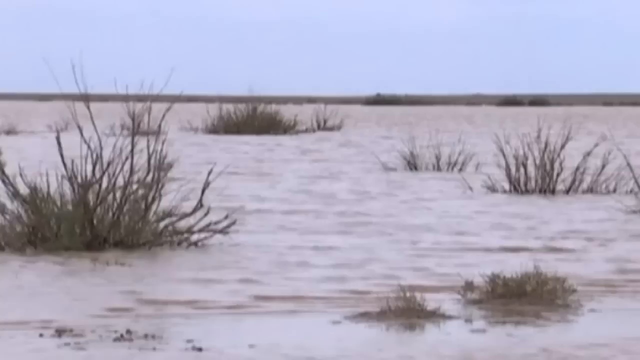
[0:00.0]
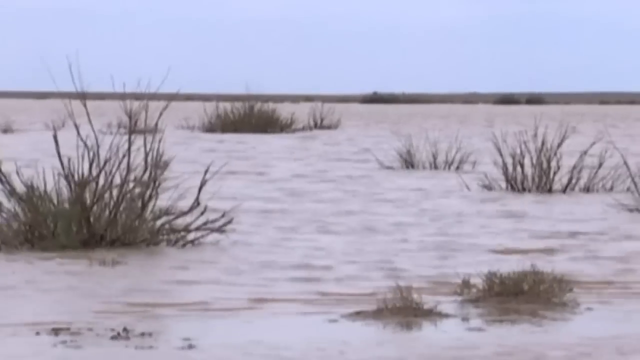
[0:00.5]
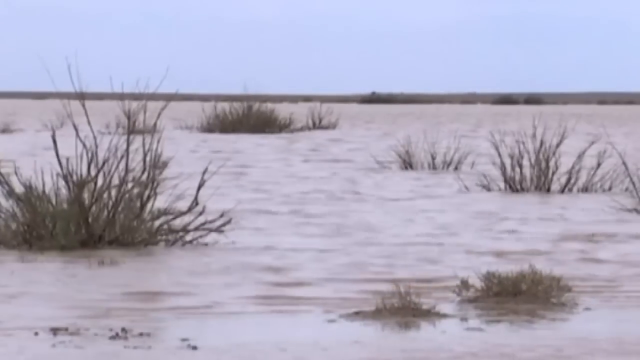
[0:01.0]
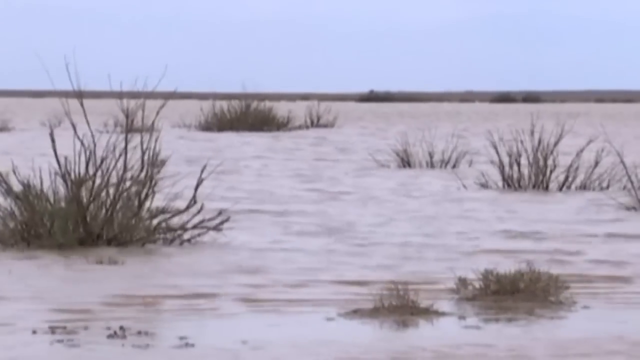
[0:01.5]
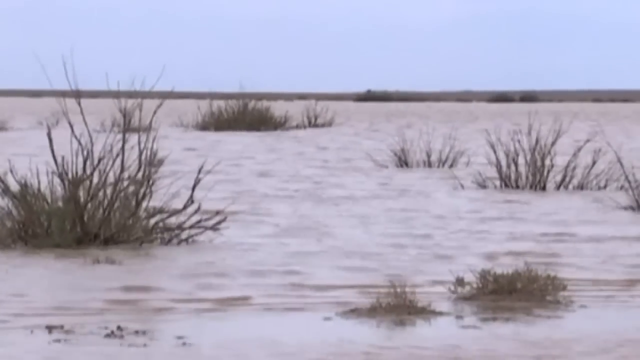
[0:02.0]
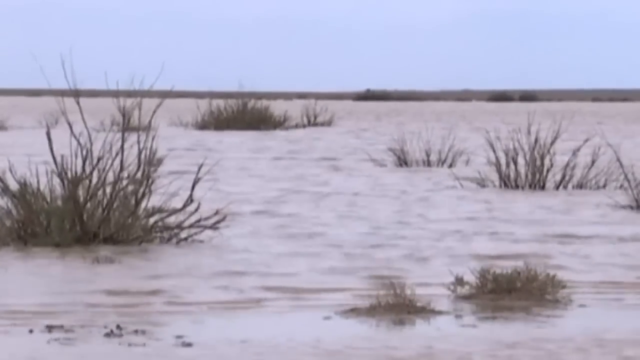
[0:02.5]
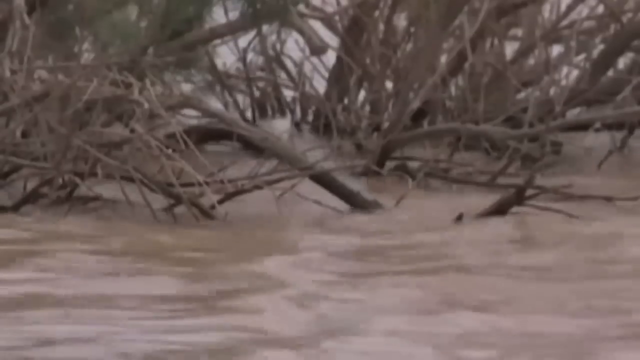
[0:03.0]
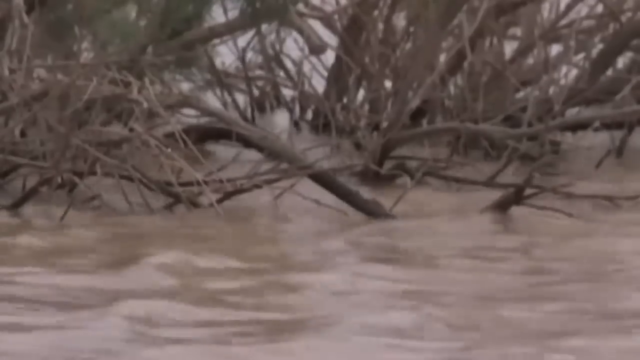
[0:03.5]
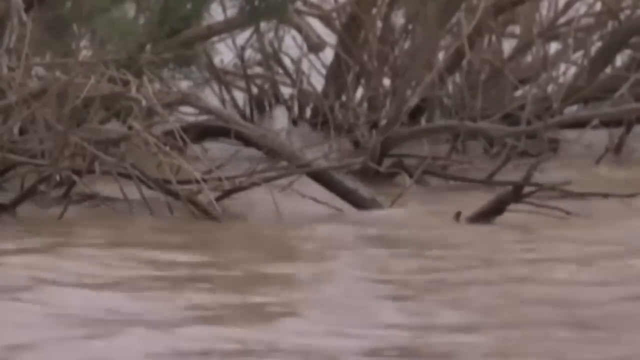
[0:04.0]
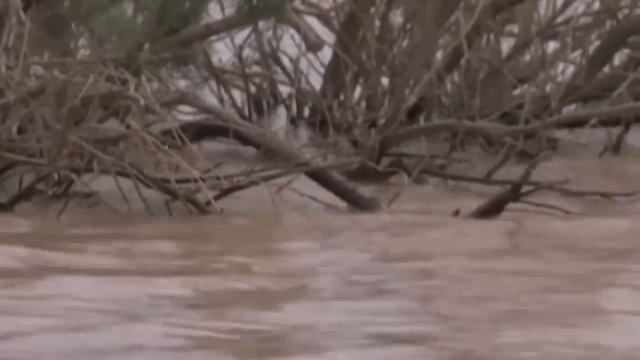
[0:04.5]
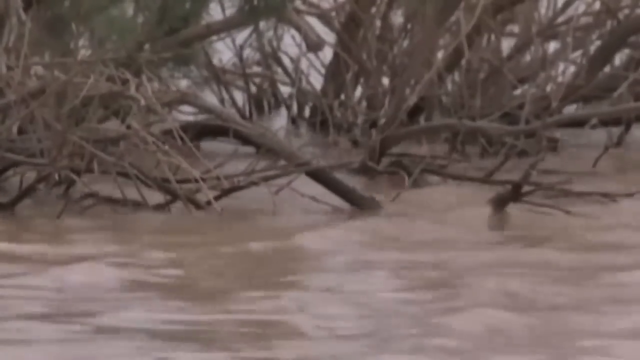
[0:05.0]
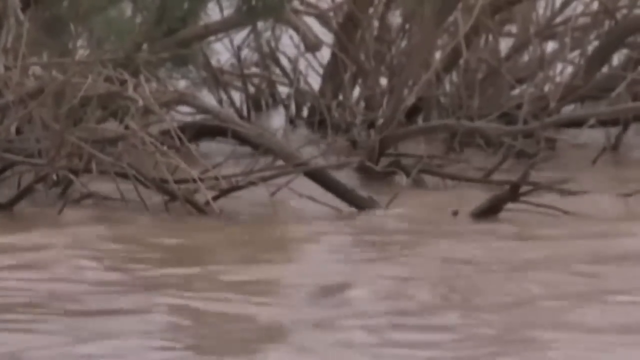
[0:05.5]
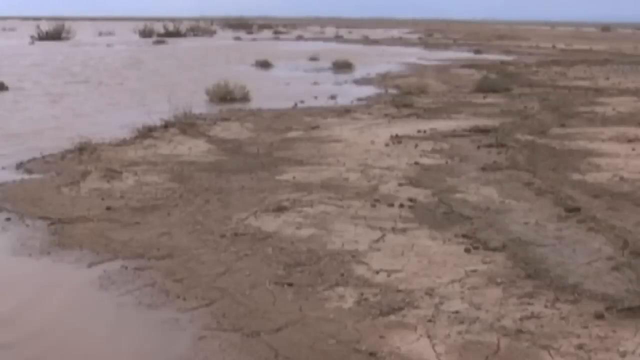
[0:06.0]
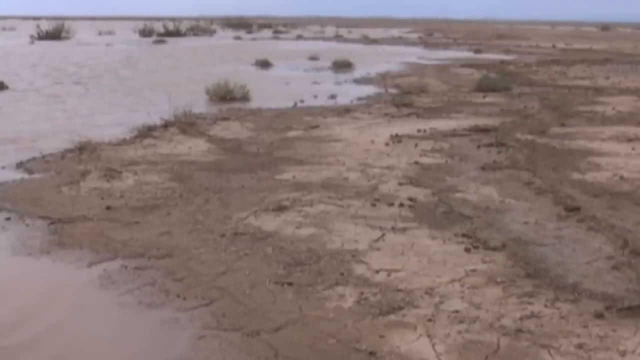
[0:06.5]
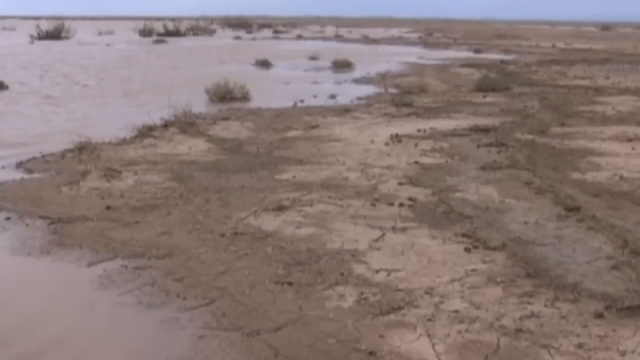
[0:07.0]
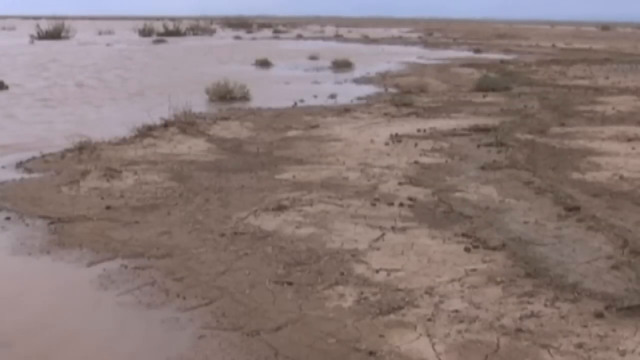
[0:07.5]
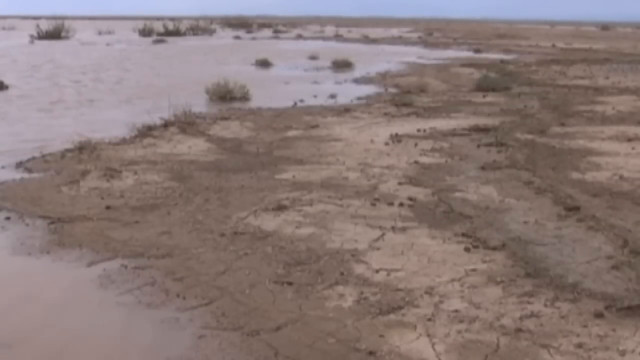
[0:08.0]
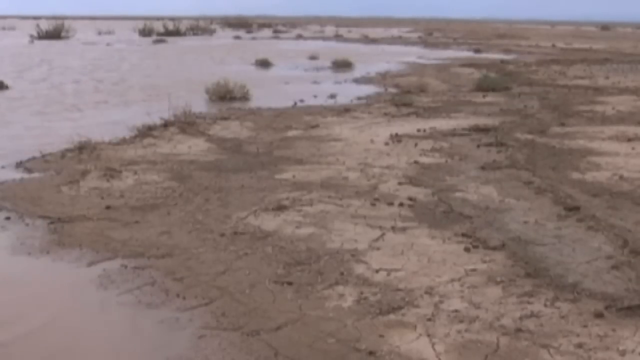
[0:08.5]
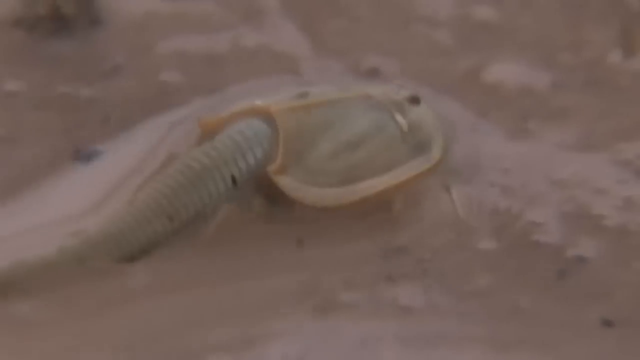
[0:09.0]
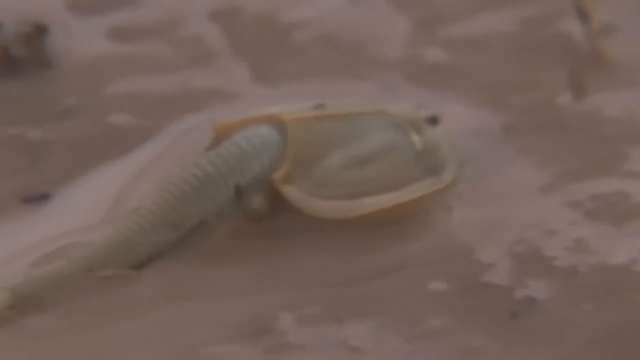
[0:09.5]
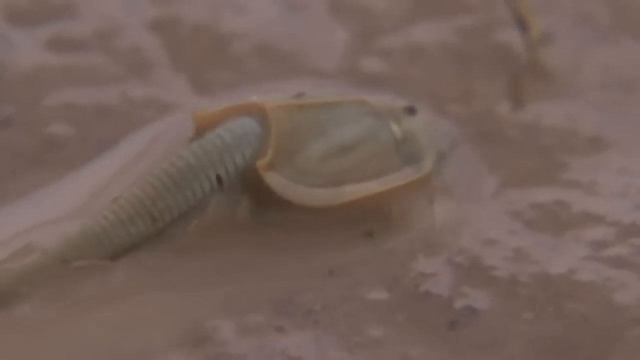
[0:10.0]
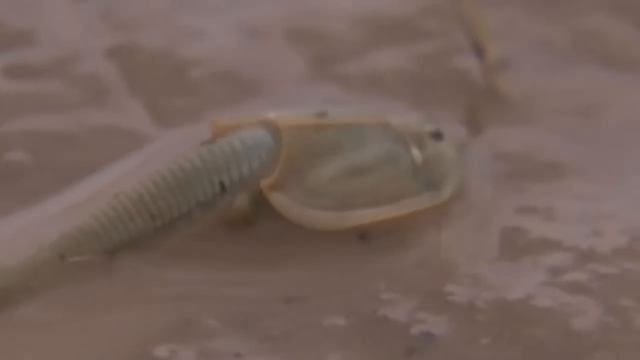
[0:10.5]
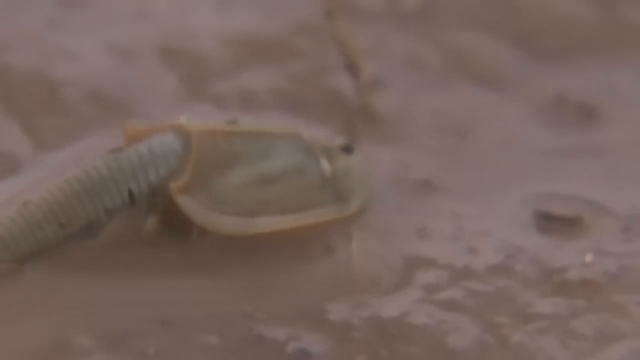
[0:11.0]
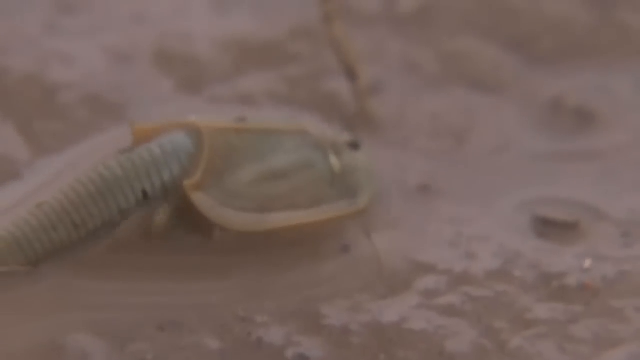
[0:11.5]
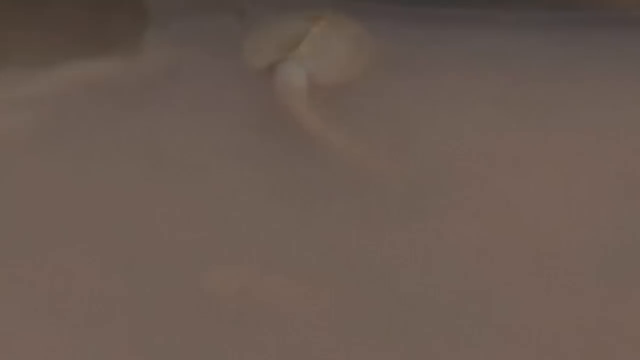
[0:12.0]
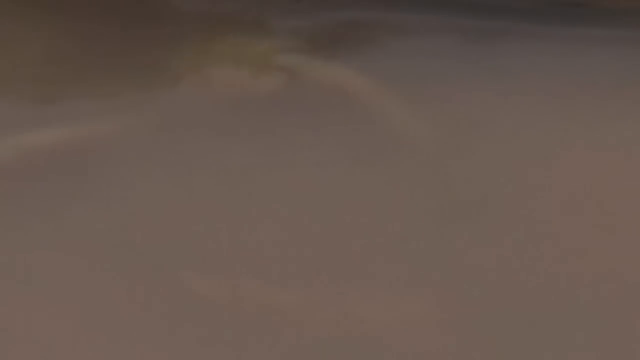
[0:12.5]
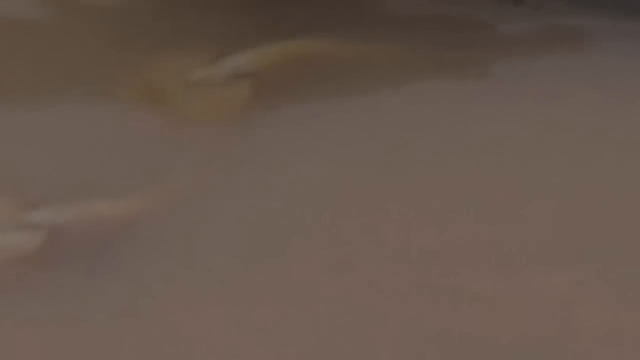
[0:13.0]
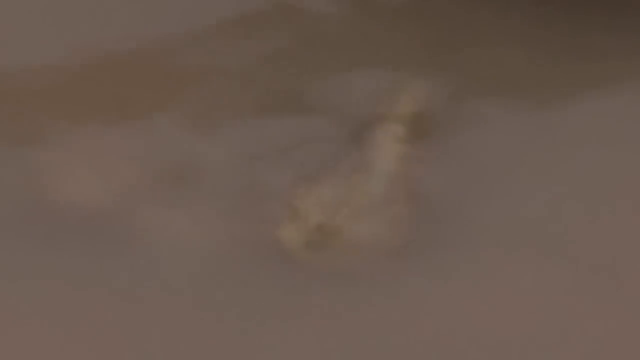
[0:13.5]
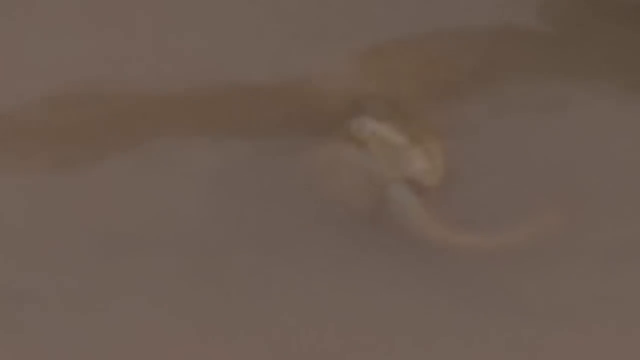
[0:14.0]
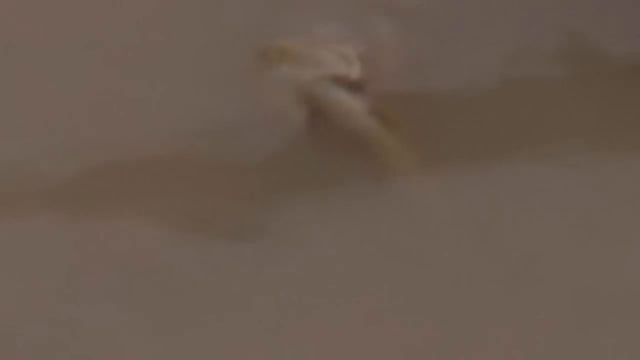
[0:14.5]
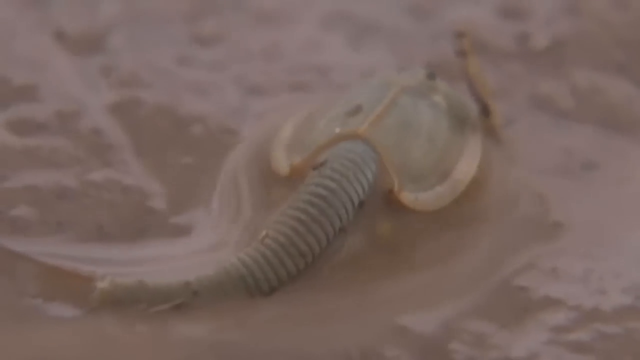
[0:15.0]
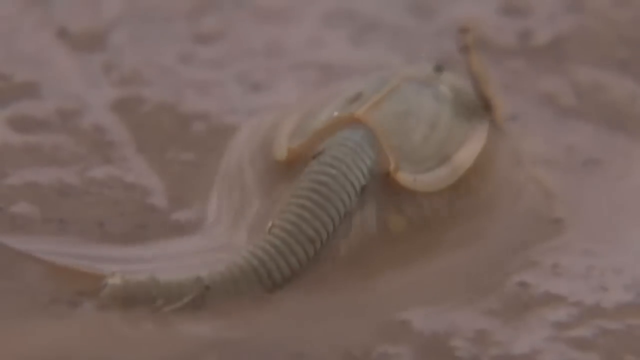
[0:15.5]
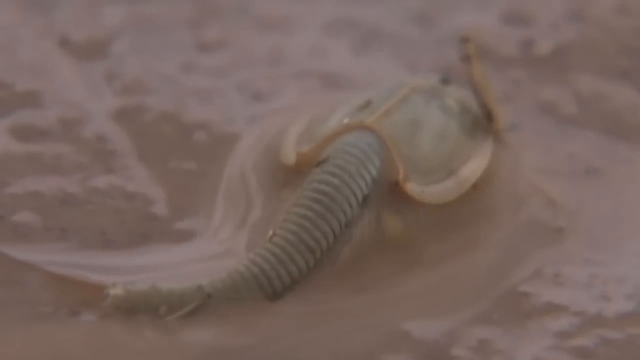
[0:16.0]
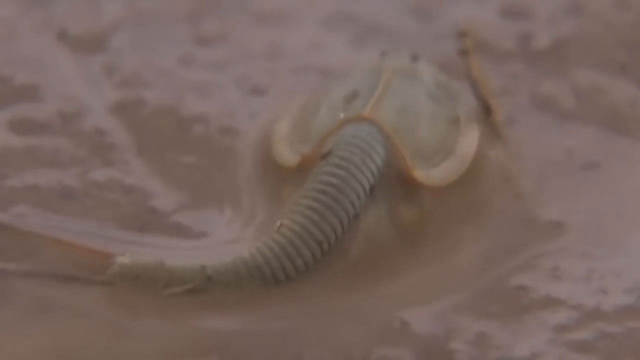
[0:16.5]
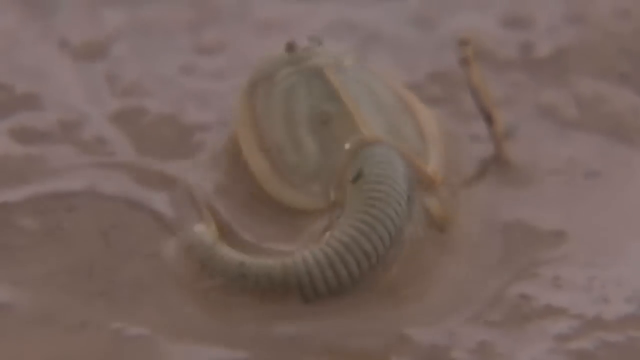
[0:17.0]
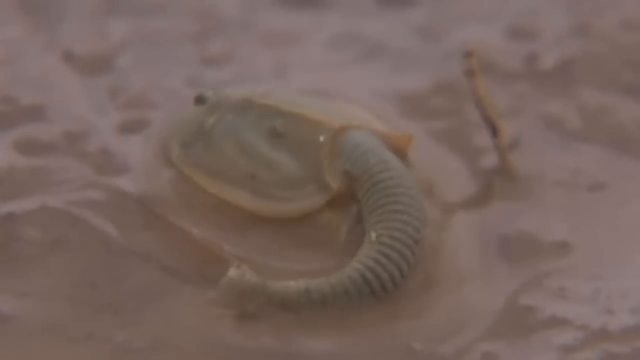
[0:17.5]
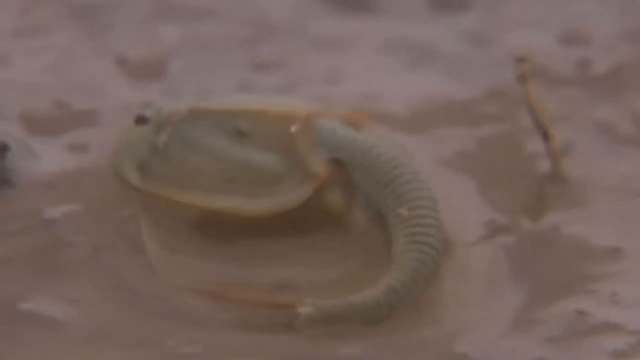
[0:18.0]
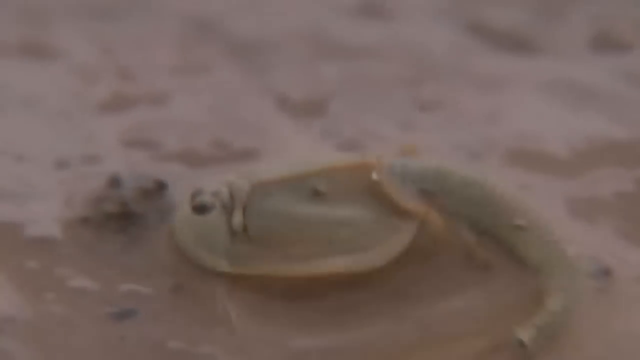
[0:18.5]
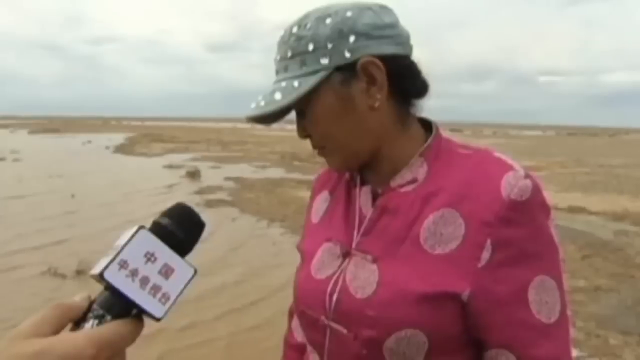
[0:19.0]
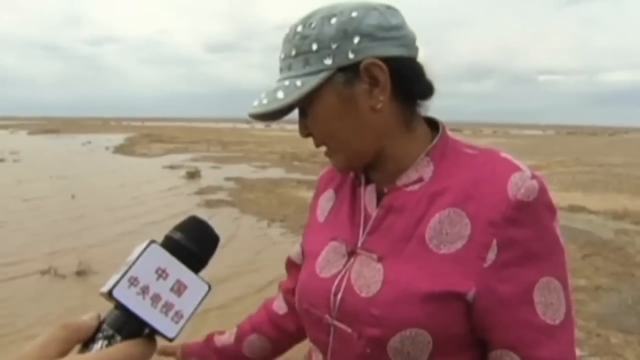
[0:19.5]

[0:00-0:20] The video opens on an open space where the tops of either trees or bushes stand out in an area that looks to have been flooded. The water moves gently, swirling as if flowing, around the tops of limbs and grass. To the right is an area that is completely dry. Some type of creature that looks basically like a mollusk swims around in the water; it resembles a microscopic view of a sperm cell, with a tail and a head, and it has two eyes on the top.